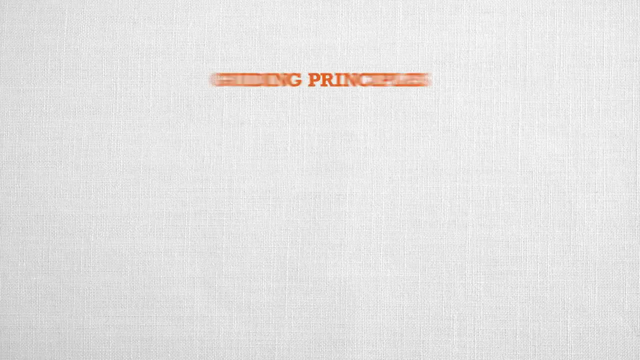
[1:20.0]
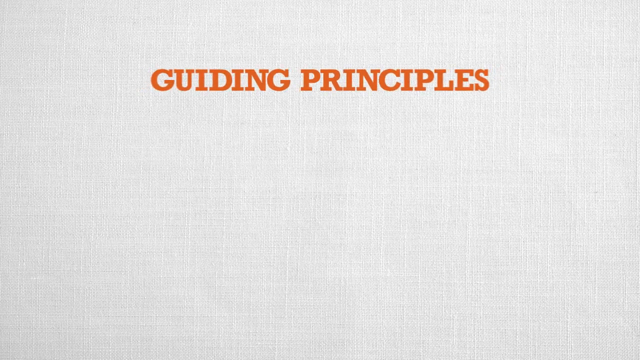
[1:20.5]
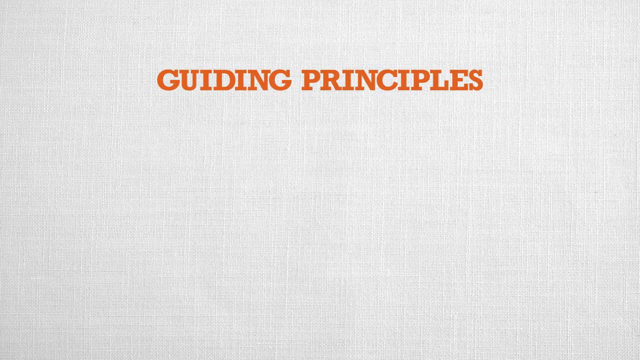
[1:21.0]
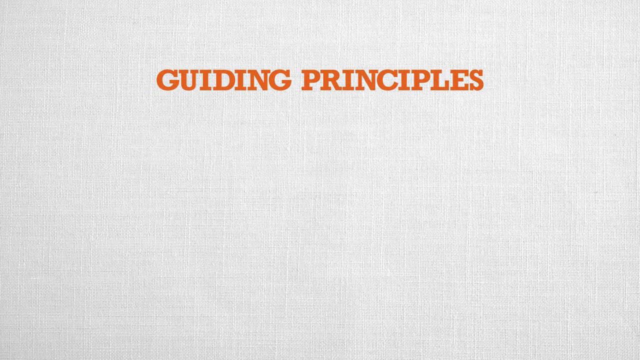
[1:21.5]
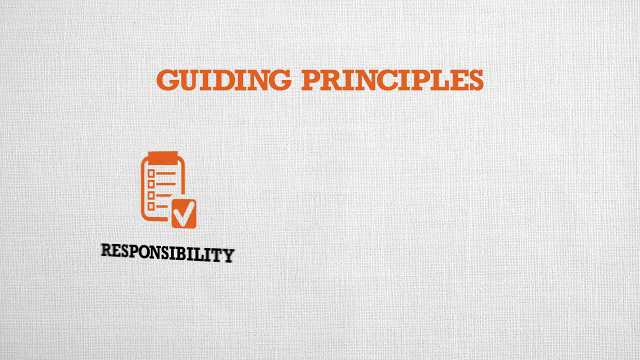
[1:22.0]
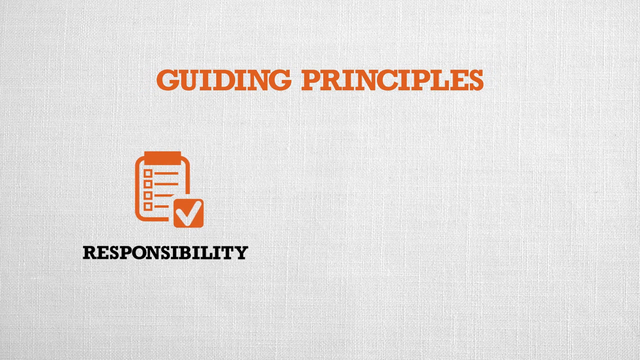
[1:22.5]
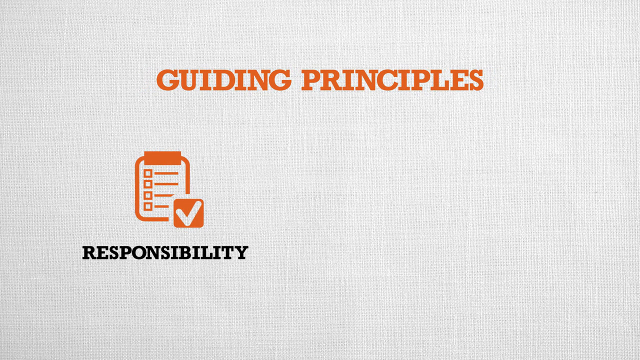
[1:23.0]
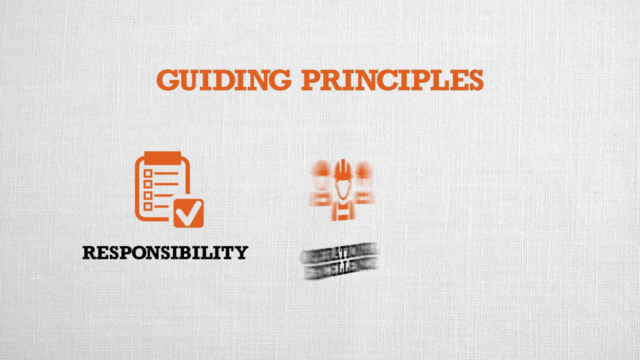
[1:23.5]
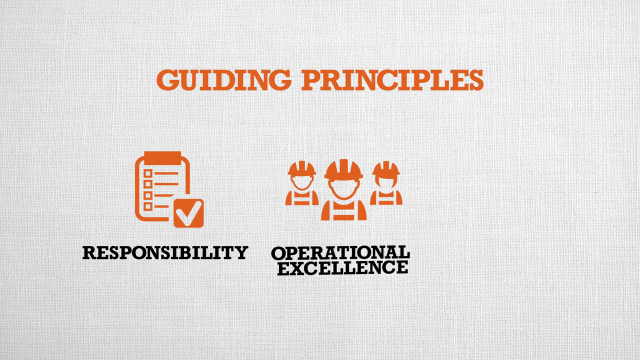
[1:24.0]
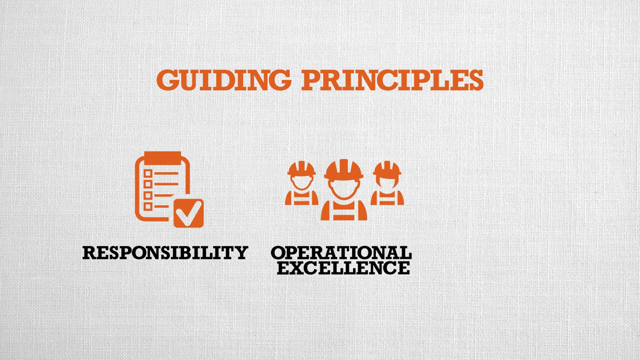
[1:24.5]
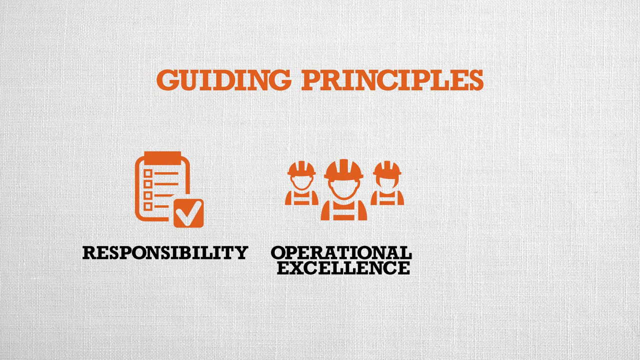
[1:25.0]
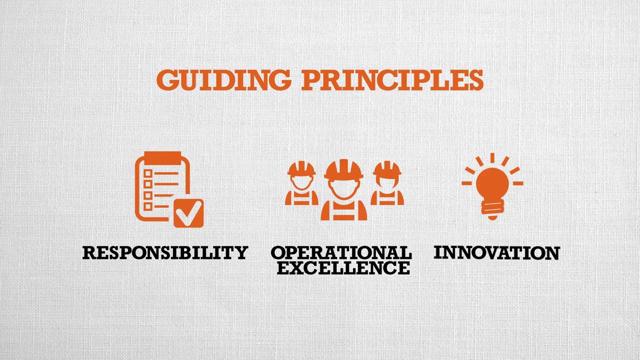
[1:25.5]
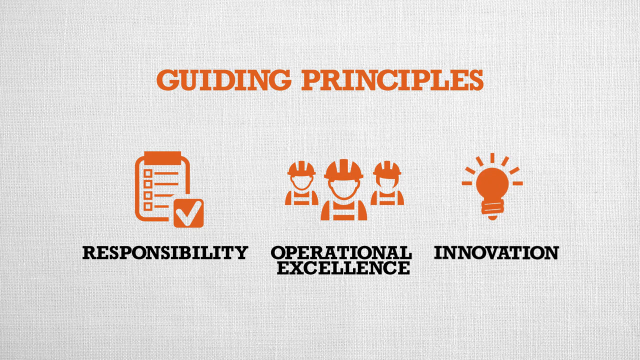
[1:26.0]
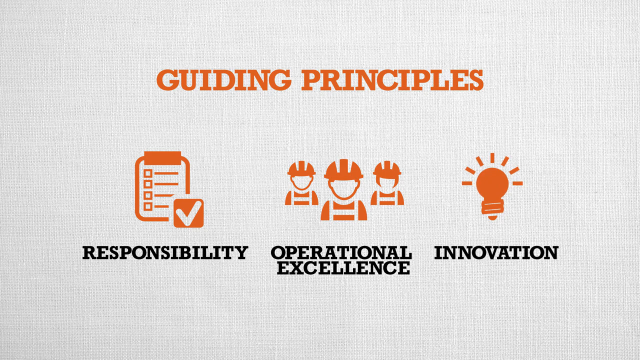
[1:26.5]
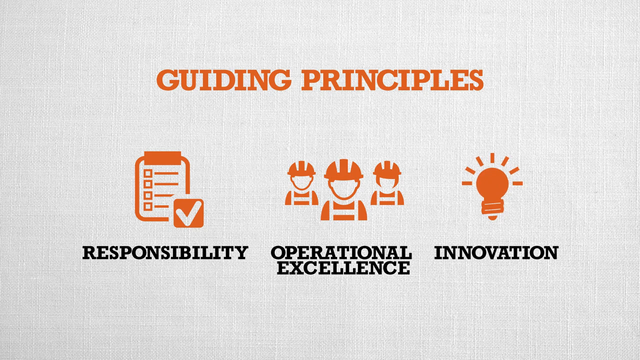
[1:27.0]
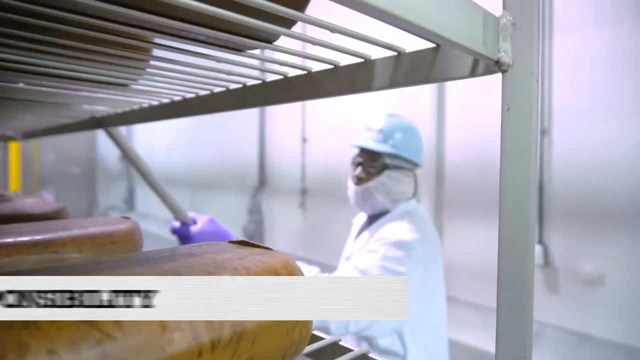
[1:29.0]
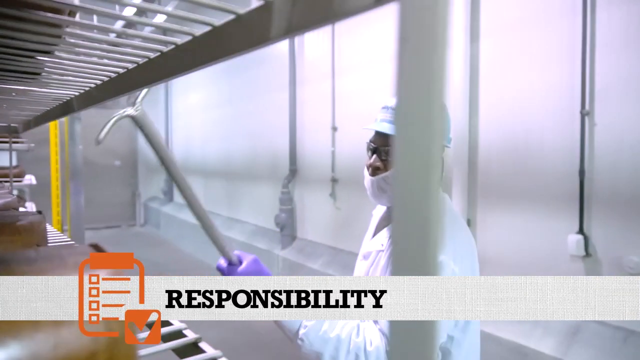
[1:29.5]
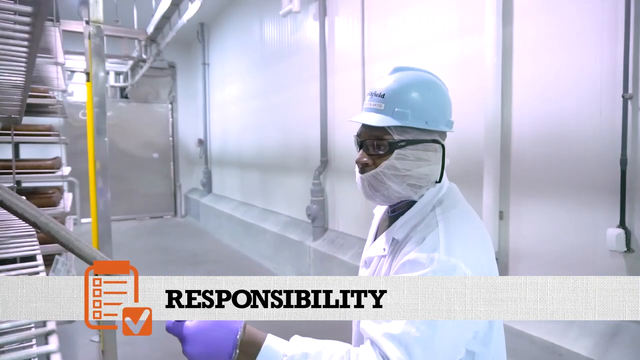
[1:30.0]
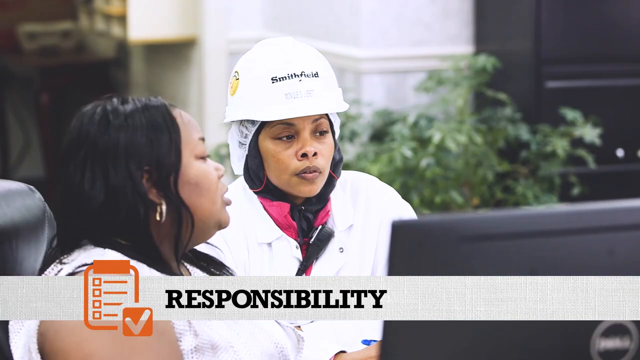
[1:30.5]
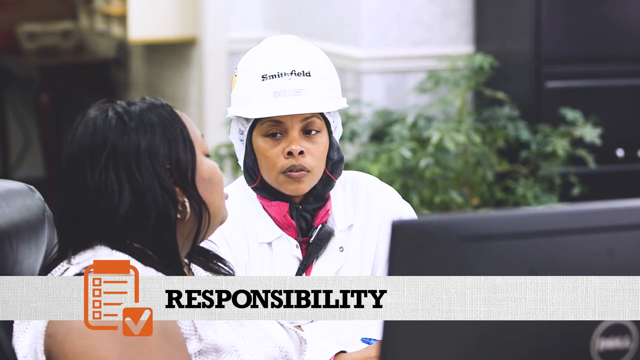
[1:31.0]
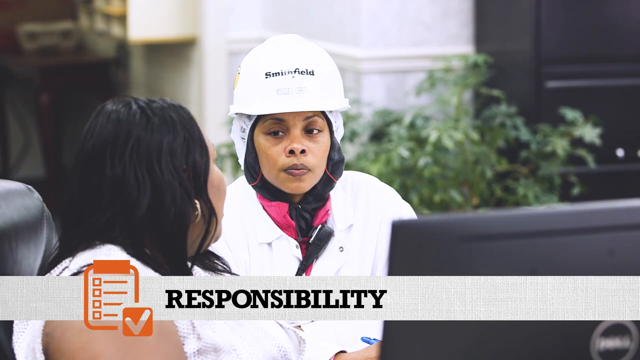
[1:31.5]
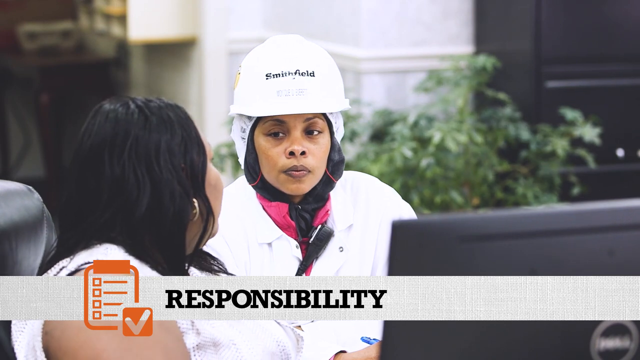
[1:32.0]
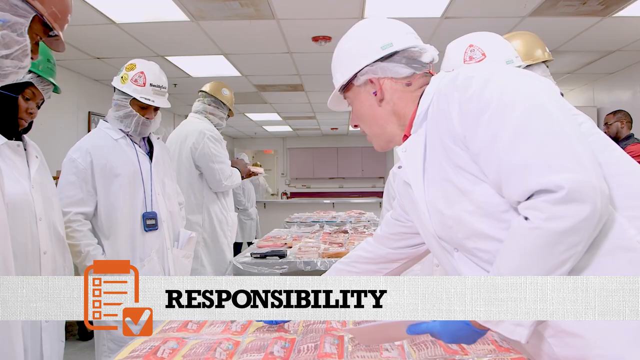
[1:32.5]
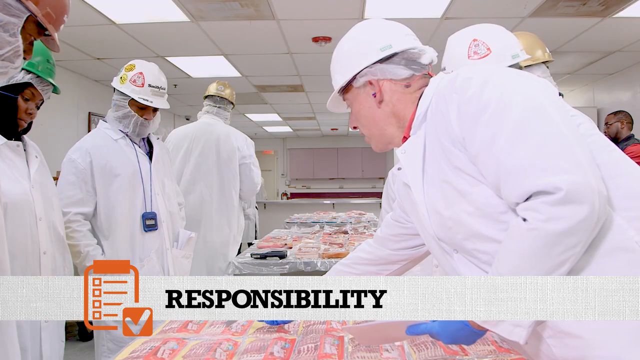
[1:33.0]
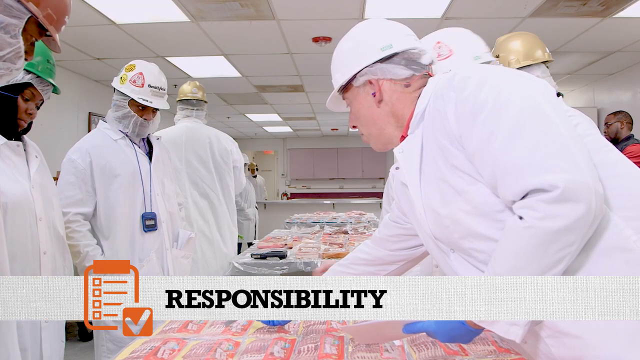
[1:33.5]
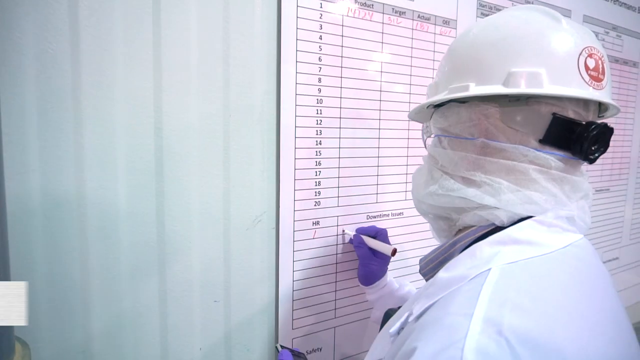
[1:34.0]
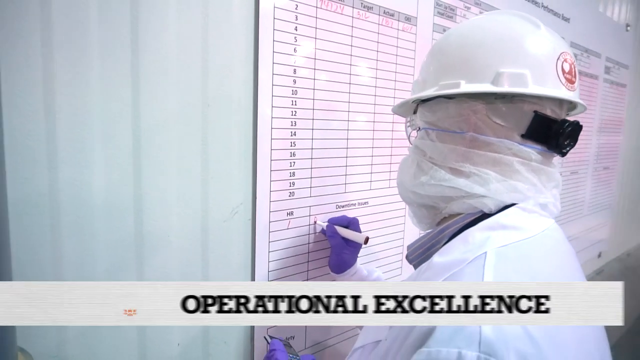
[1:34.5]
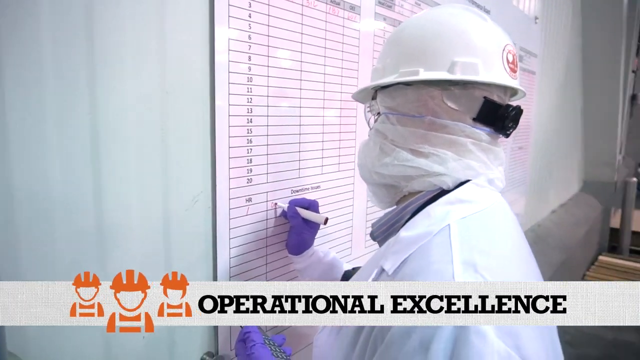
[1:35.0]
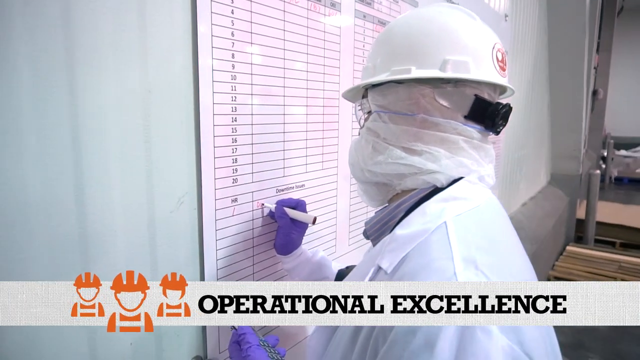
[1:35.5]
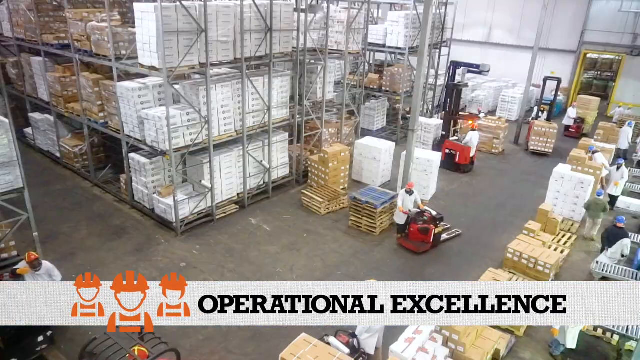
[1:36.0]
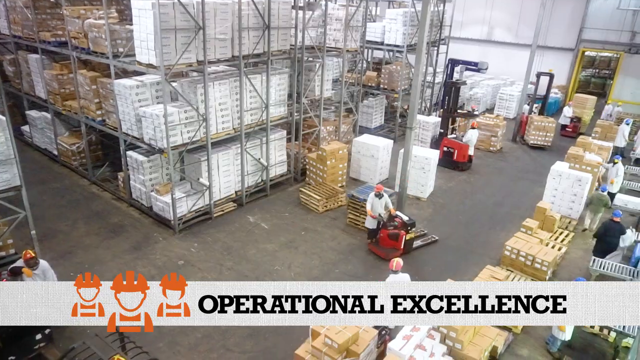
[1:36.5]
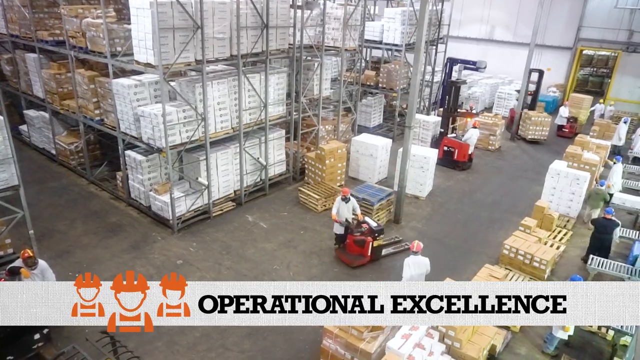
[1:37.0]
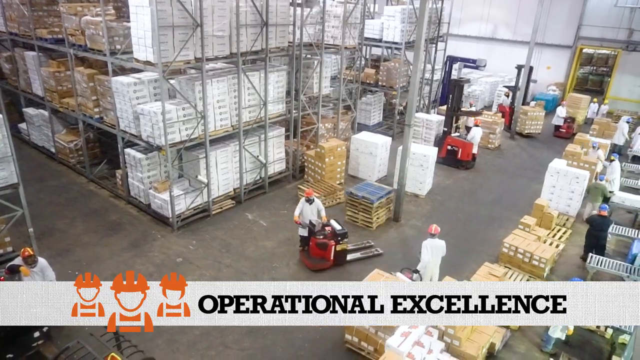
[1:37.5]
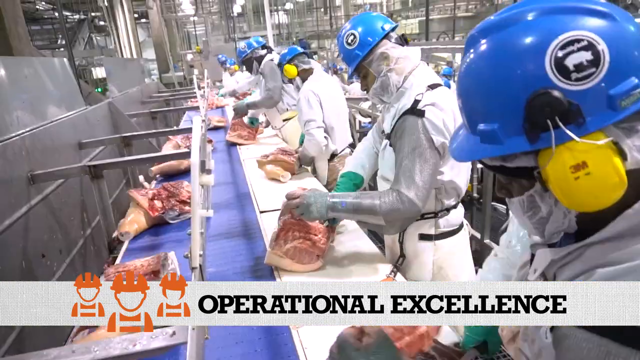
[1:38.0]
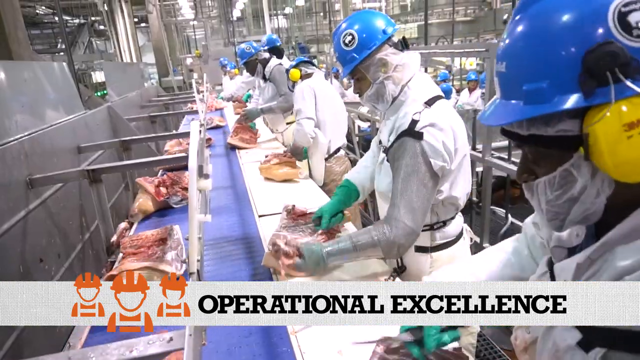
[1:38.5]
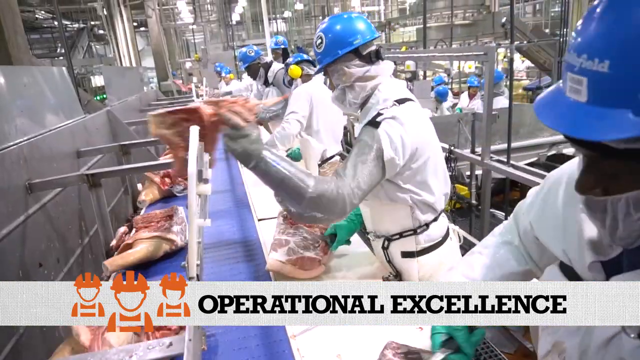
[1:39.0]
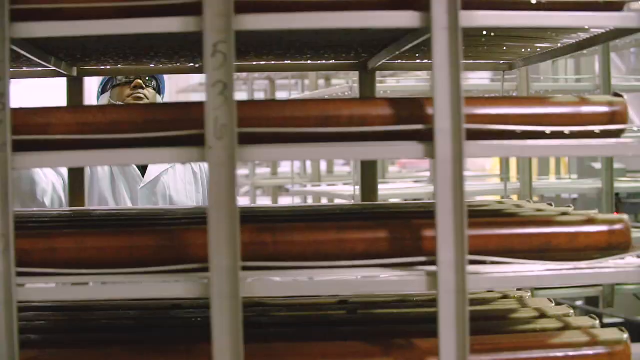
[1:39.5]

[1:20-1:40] Orange writing on a white background reads "GUIDING PRINCIPLES" in capital letters. Underneath, an emblem appears of a notebook with a checklist on it and a tick mark next to it, with "Responsibility" in black underneath, on the left-hand side. In the middle are three illustrations of people wearing hard hats, with "Operational excellence" in black writing underneath. Third along is an orange light bulb illustration with "Innovation" in black underneath. The Responsibility logo, along with "Responsibility", then comes up at the bottom of the screen over video clips of people around the warehouse, some wearing the Smithfield hard hat and others in normal clothes, in different environments. "Operational excellence" then comes across the bottom, with more shots across the warehouse of people dealing with meat, cutting it apart, and dealing with trolleys of items.